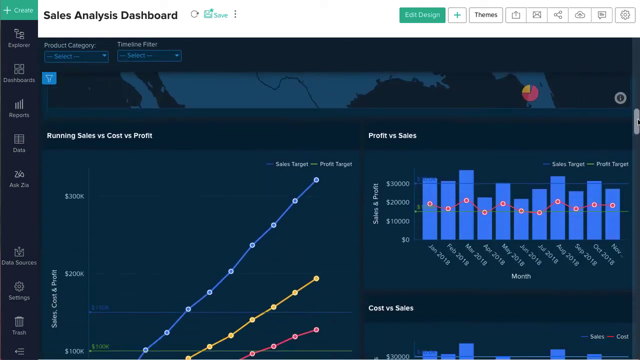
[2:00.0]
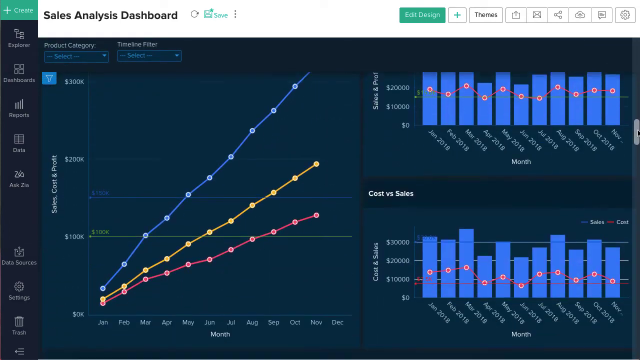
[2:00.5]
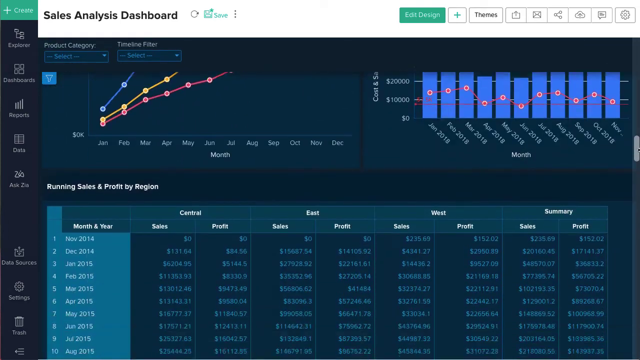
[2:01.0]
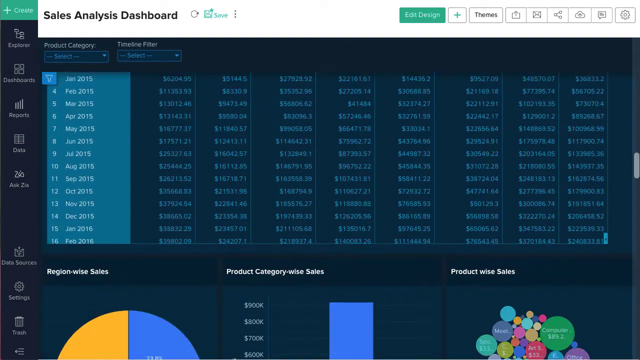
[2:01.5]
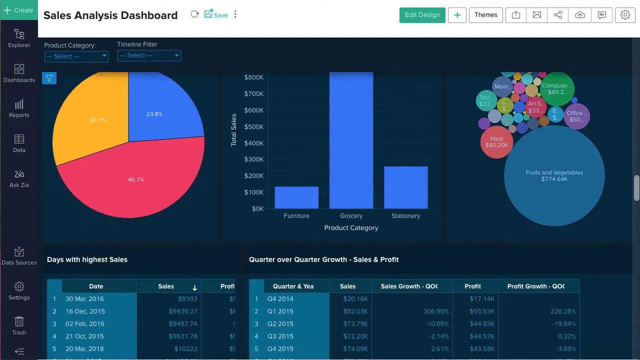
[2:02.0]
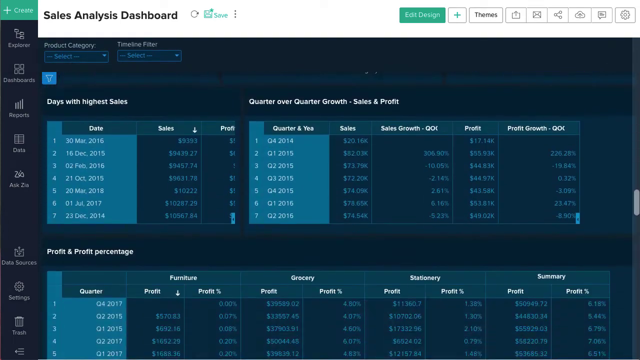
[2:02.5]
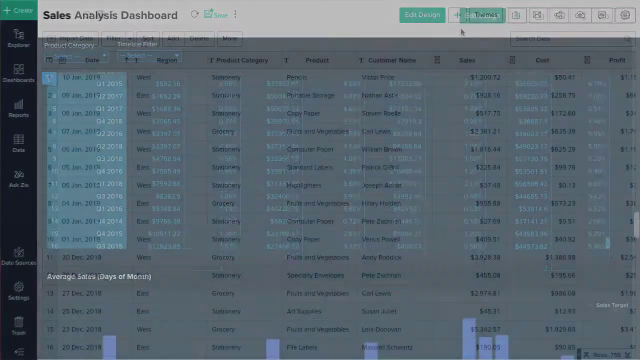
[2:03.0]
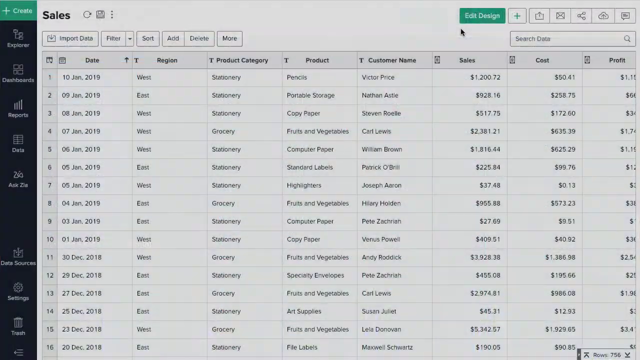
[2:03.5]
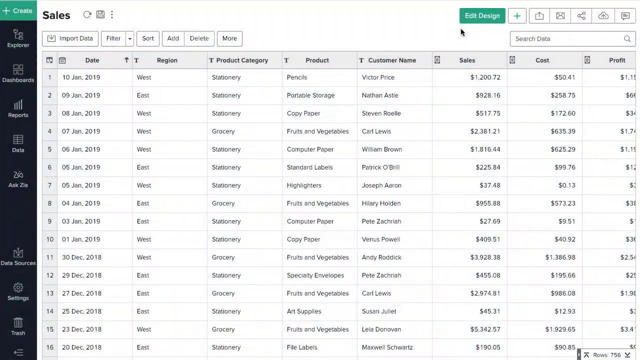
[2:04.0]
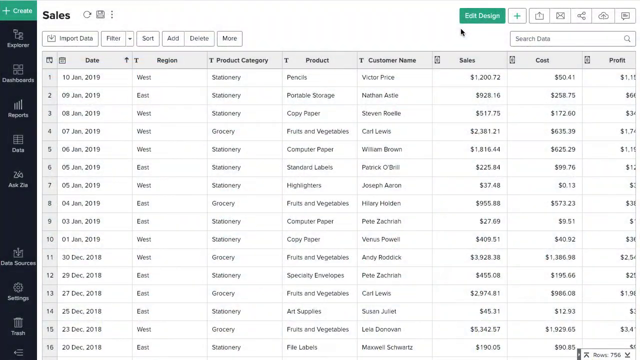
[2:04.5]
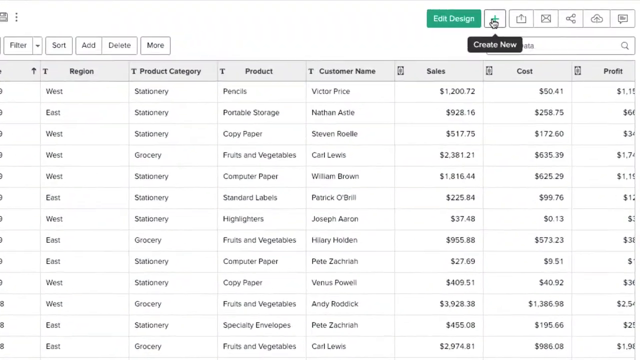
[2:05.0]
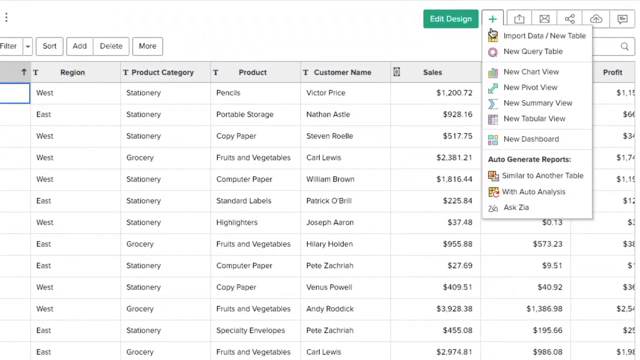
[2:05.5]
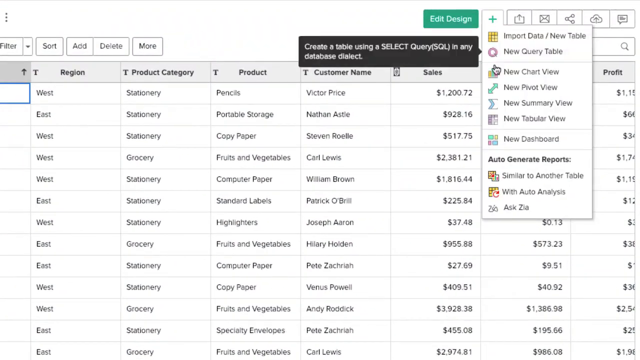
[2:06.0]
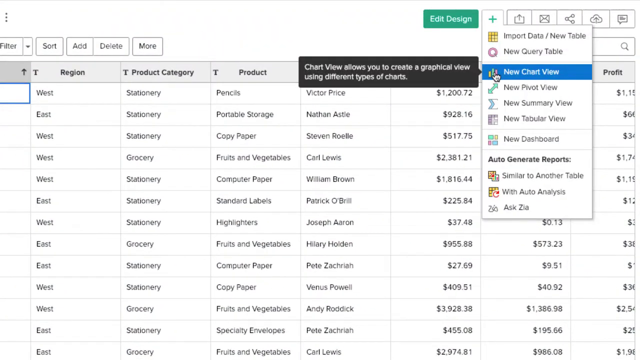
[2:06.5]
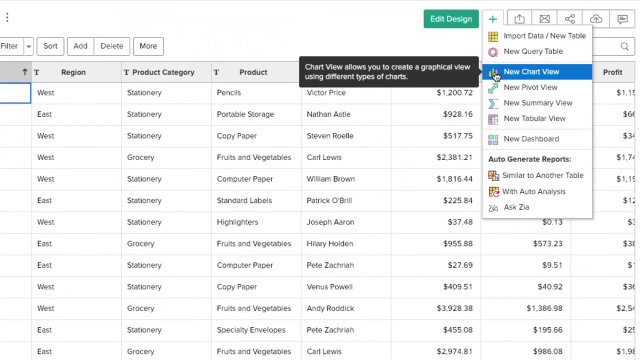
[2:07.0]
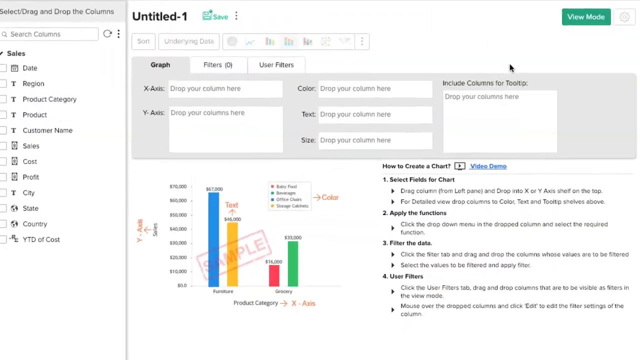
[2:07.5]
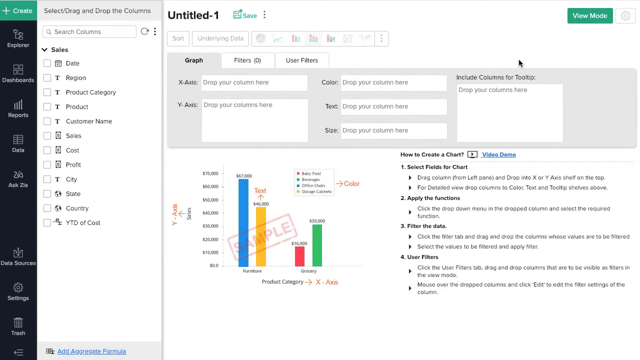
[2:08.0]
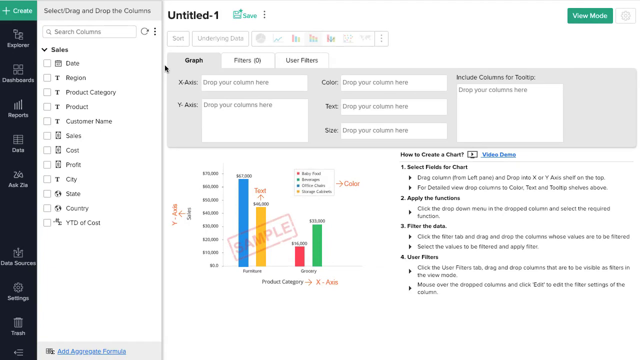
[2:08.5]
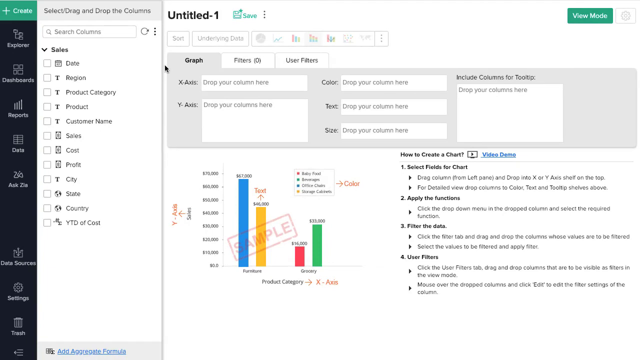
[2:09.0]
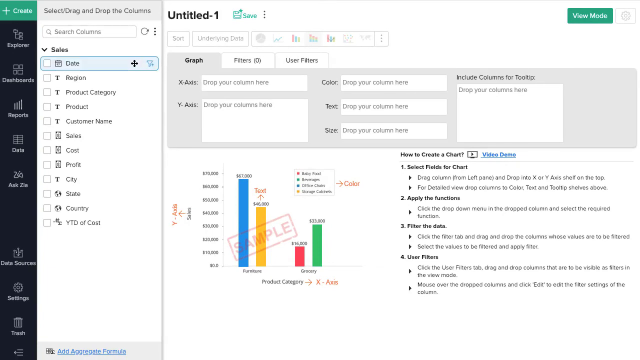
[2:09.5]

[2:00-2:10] A screen shows several graphs as the person scrolls down, with a scroll bar on the right moving down; the graphs are probably colored on a dark blue background. Tables follow, with information written in white and pale blue. The screen changes to one with "sales" as the title at the top in black text and a table of information such as products and customer names. The person clicks a button at the top, a table or list appears, and the cursor hovers over "new chart view". A new screen appears with "untitled" at the top, boxes for adding graphs, information and dates, and on the left a list of tables that can be added to the graph.